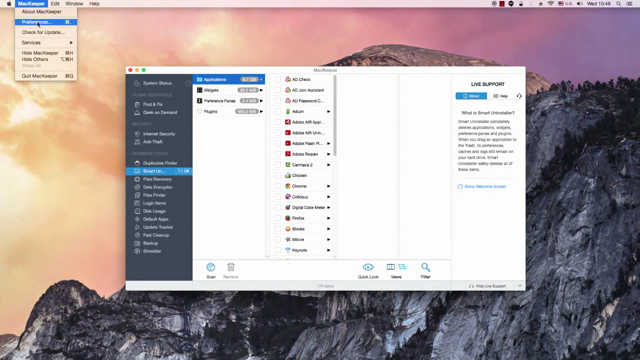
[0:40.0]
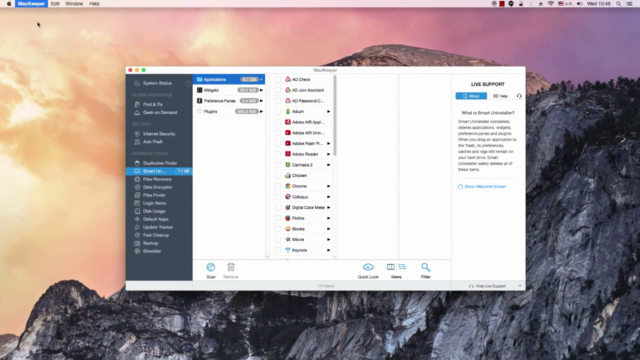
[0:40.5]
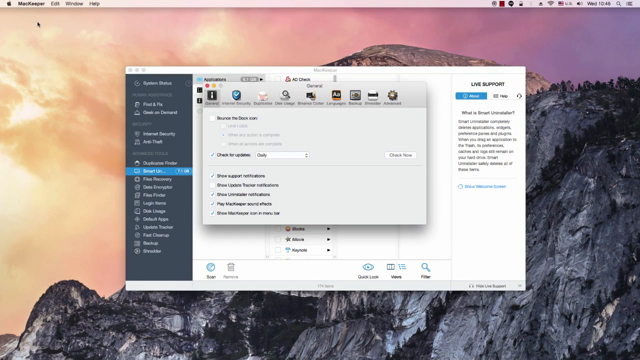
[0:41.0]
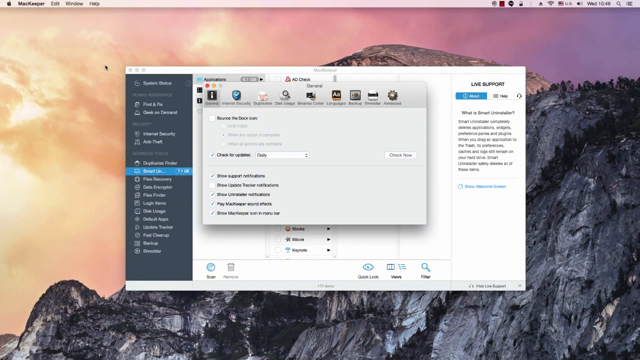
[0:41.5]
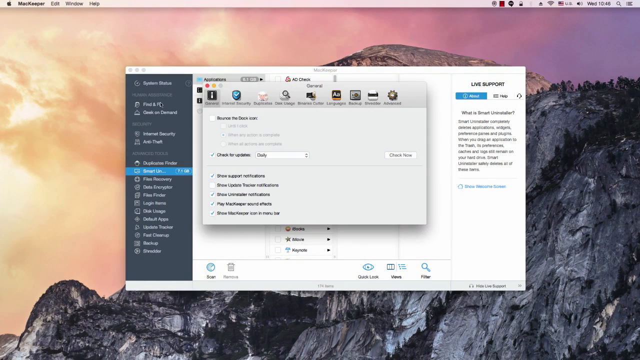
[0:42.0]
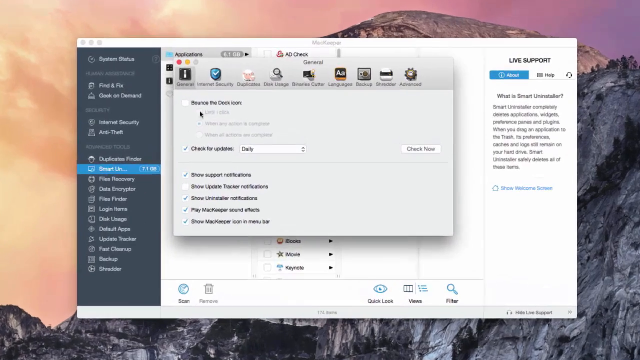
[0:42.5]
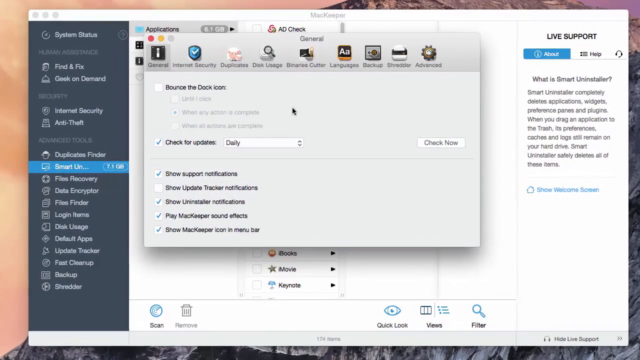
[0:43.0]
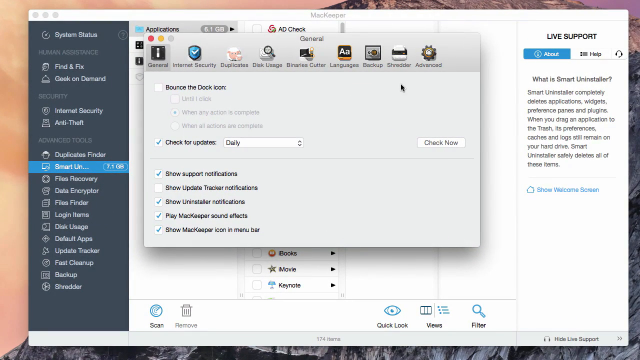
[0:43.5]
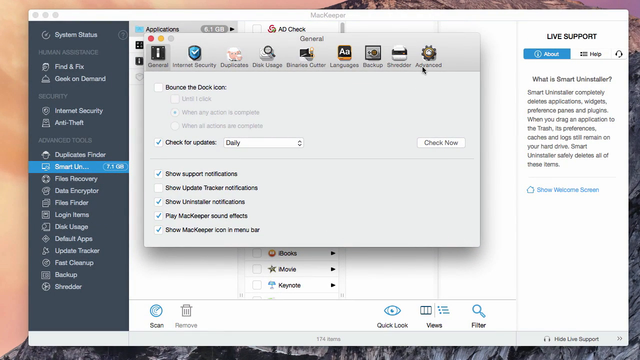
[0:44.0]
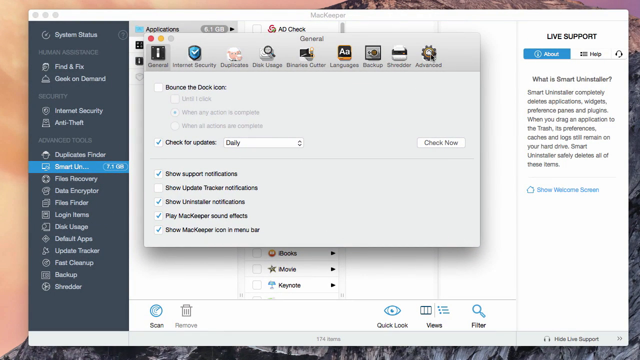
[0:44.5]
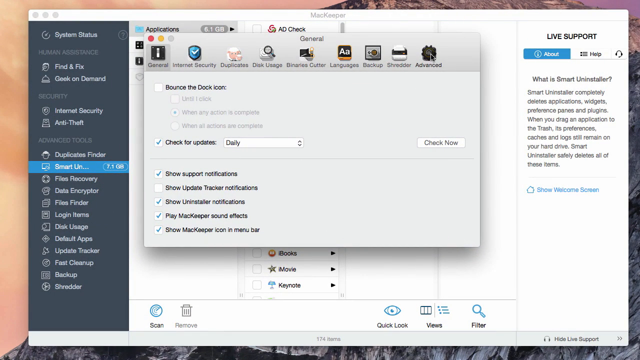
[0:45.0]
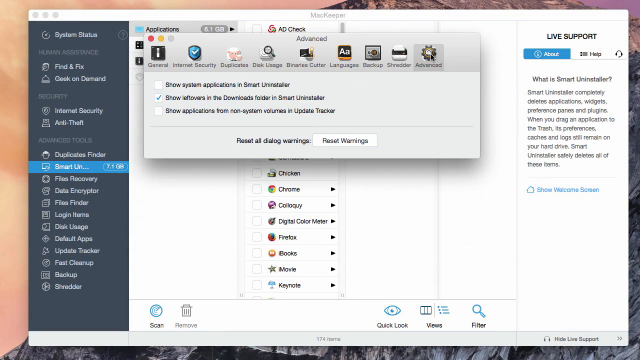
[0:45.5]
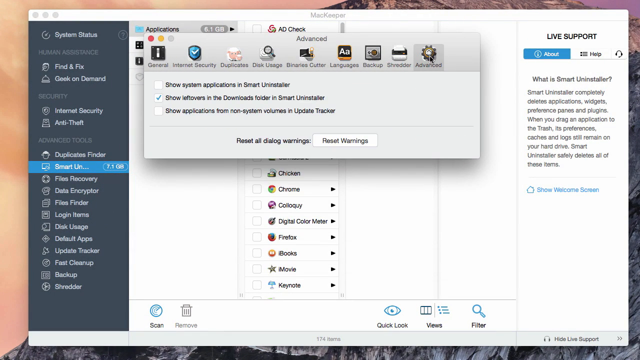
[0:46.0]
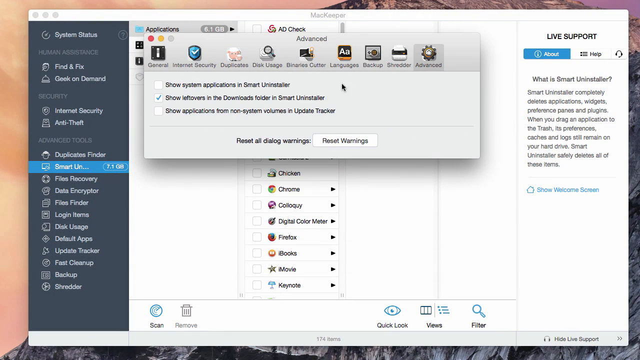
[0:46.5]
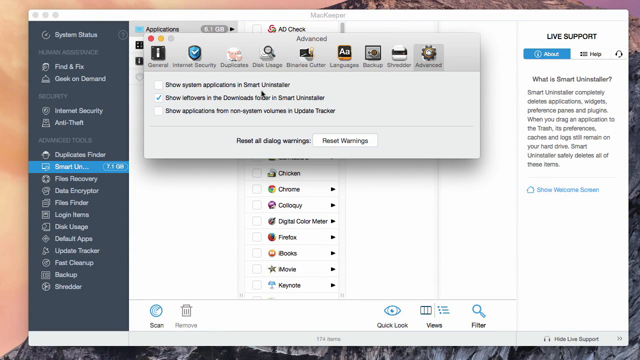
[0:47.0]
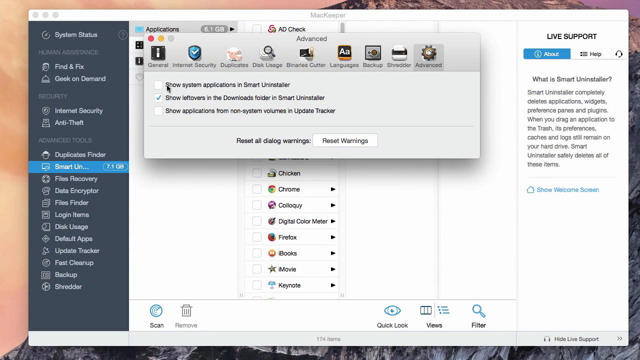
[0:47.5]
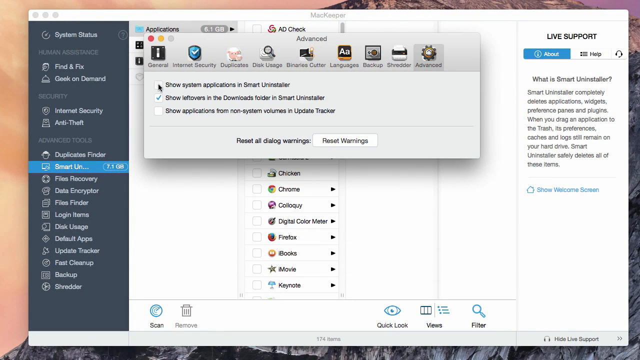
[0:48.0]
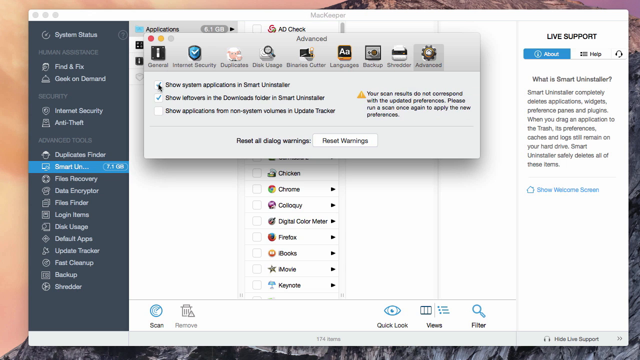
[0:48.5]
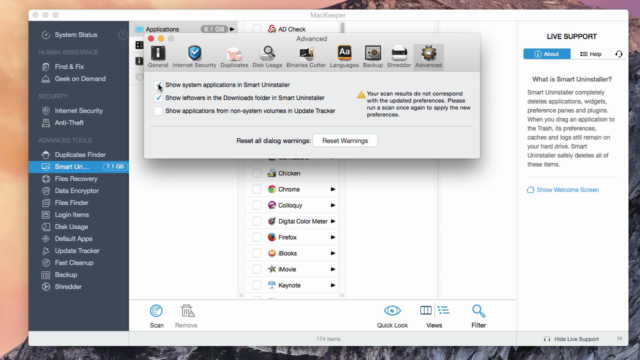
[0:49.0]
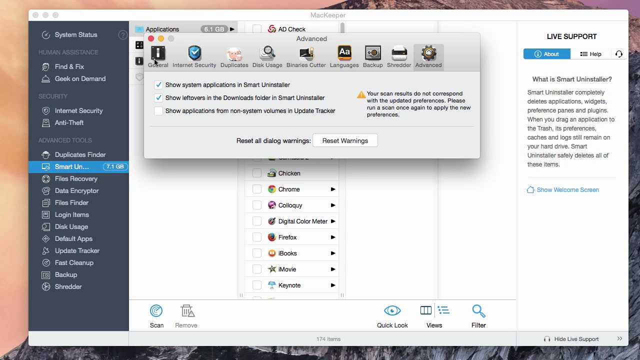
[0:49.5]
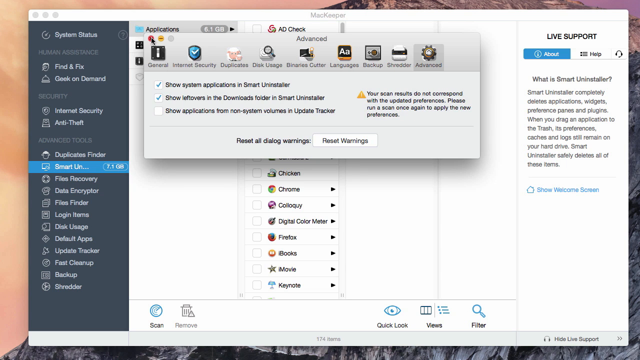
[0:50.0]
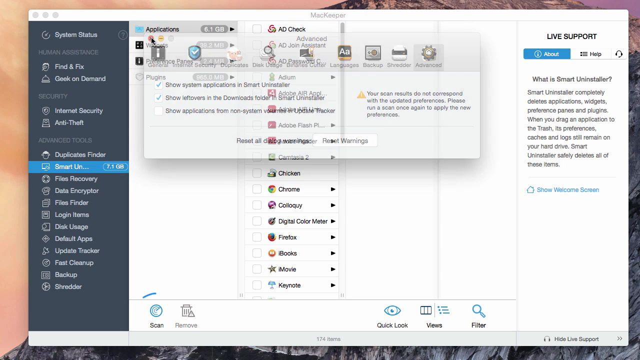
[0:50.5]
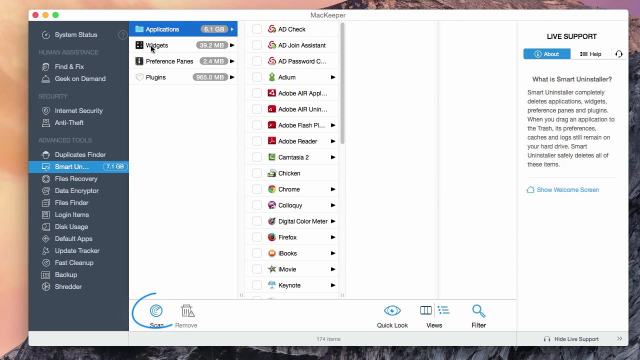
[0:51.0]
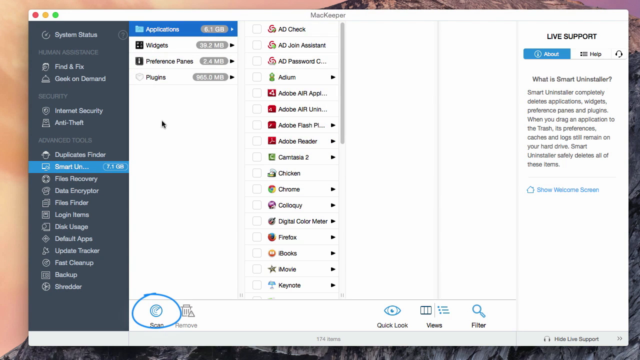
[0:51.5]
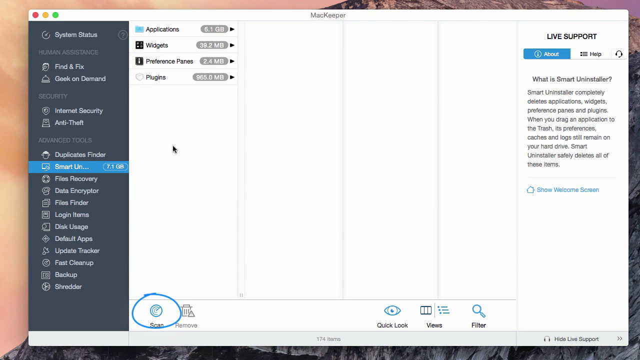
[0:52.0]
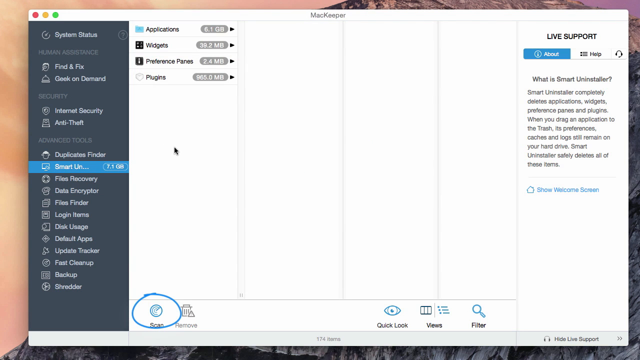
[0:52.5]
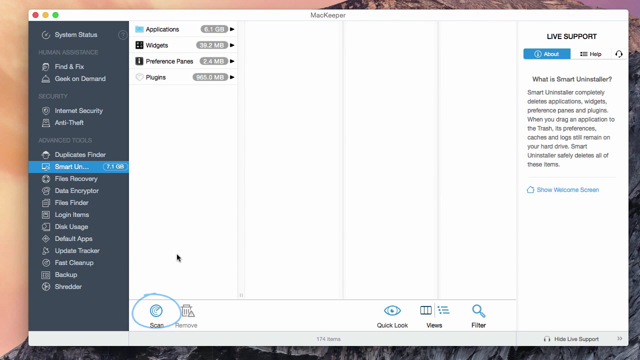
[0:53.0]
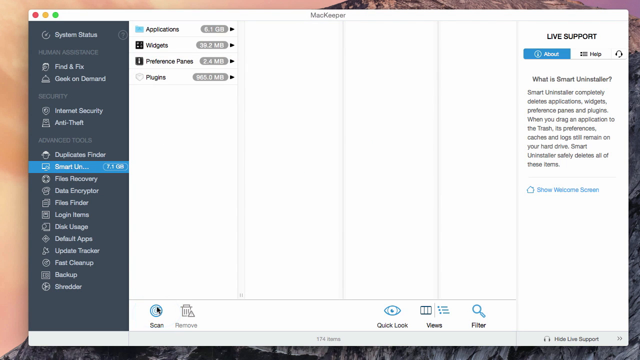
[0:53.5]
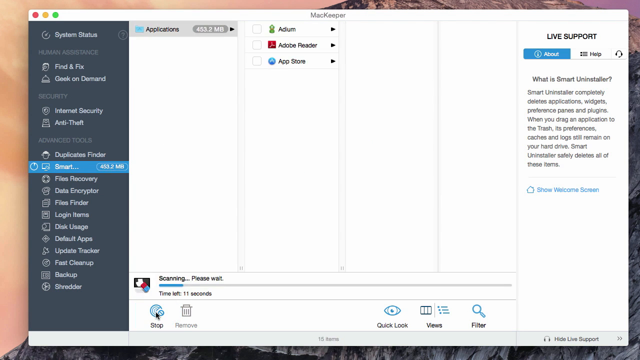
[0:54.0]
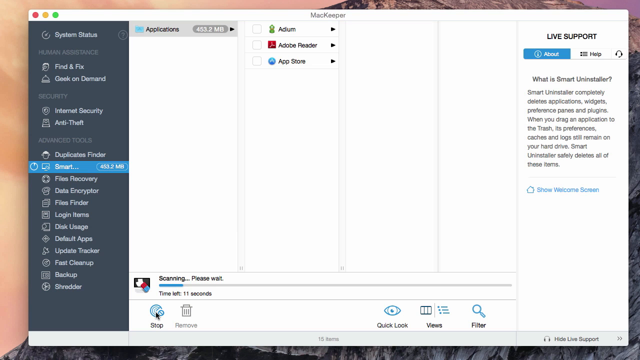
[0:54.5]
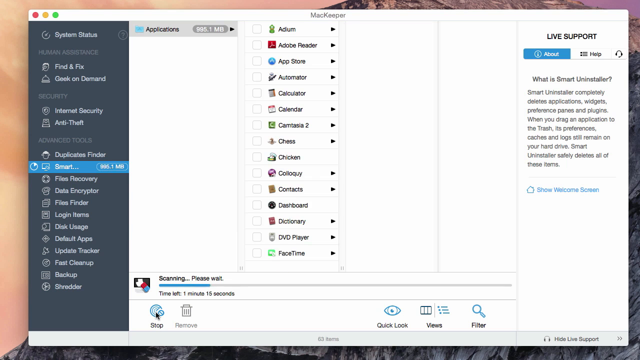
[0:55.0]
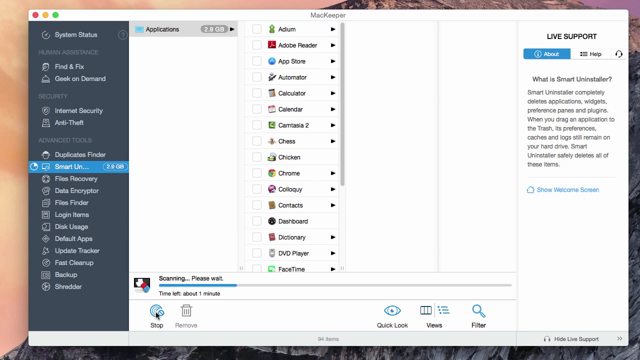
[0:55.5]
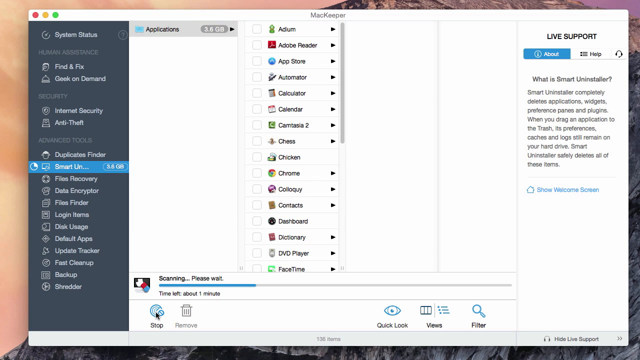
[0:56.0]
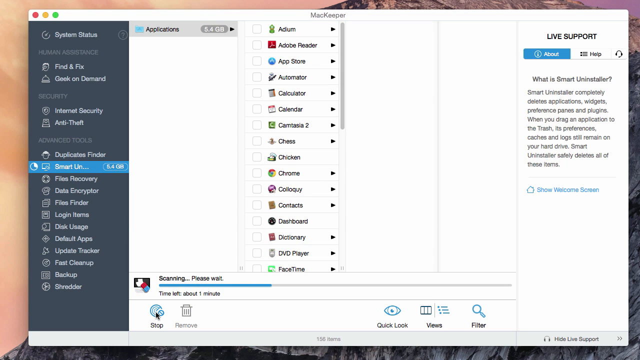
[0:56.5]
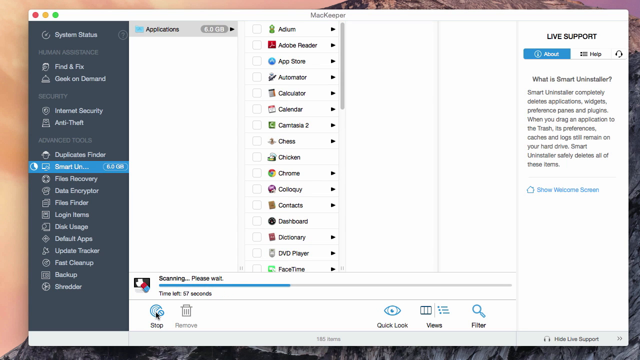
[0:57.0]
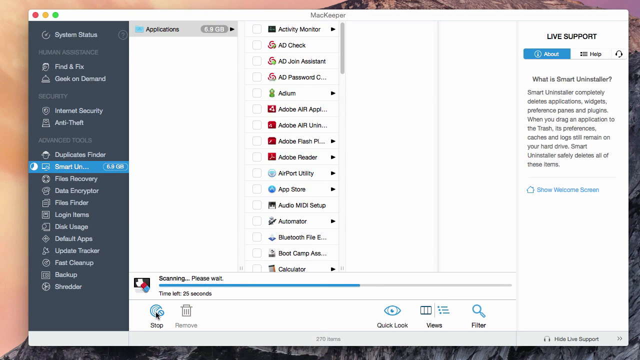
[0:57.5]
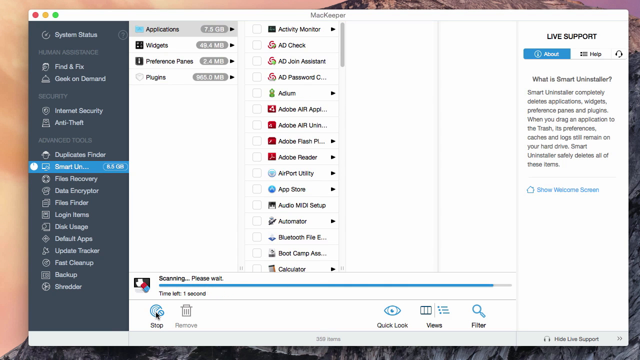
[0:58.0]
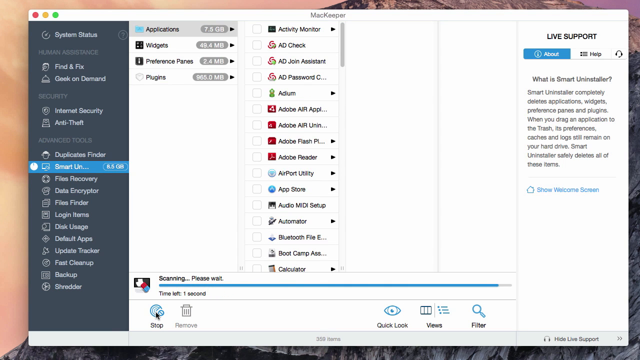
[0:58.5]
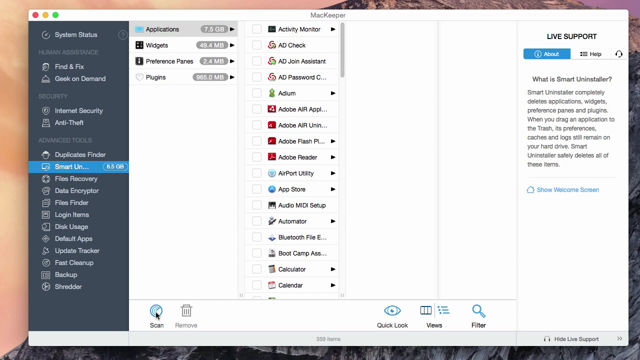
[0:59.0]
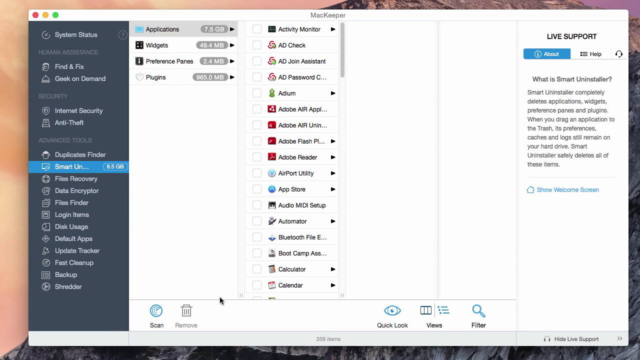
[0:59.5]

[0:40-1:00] The user clicks the Preferences tab, which opens the General window, then moves the mouse to the Advanced section on the far right of the open tab. Several selections are shown. The user clicks the empty white box of the top selection, and a blue checkmark appears inside it. More text appears, letting the user know that "your scan results do not correspond with the updated preferences." The user moves the mouse up to the X on the newly opened window and clicks it. The MacKeeper software is then seen in the middle of the screen, and a blue circle goes around the scan symbol and button at the bottom of the software. The user moves the mouse down to the Scan button and clicks it, and the scan starts, with all the activity visible while it runs. The mouse moves back up.